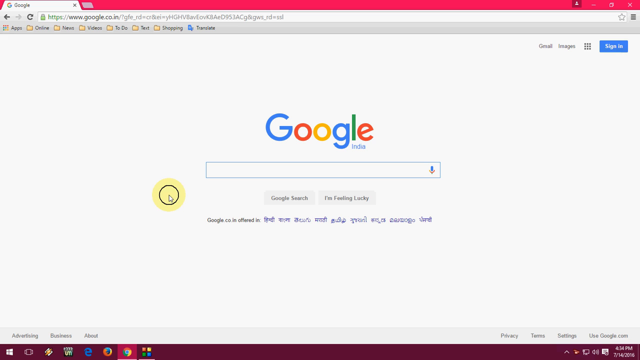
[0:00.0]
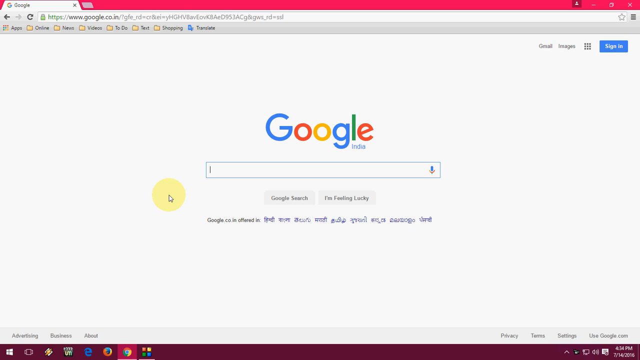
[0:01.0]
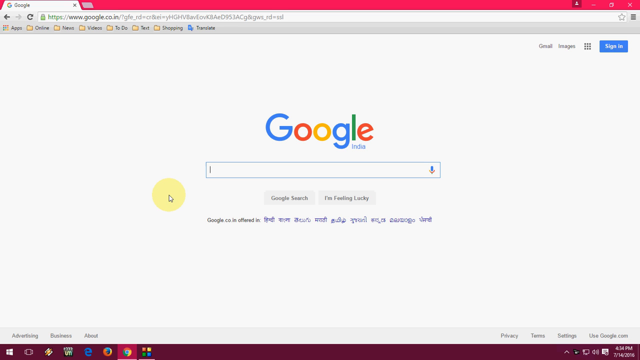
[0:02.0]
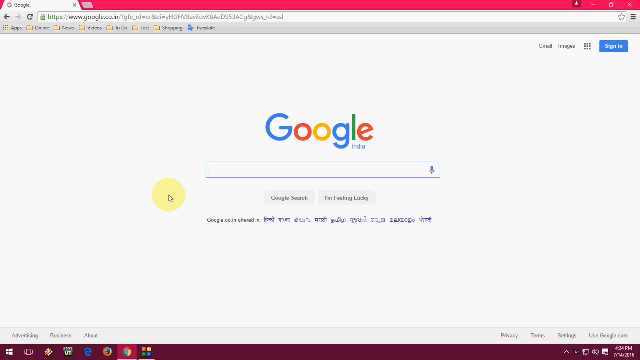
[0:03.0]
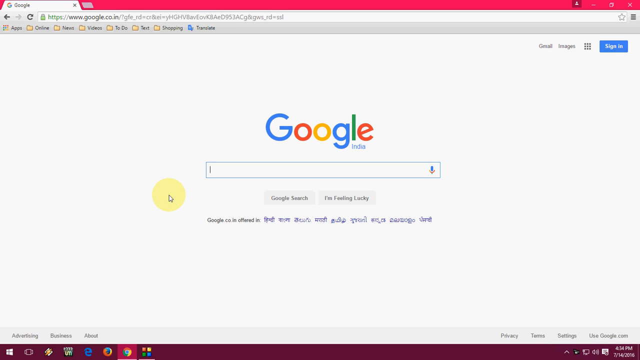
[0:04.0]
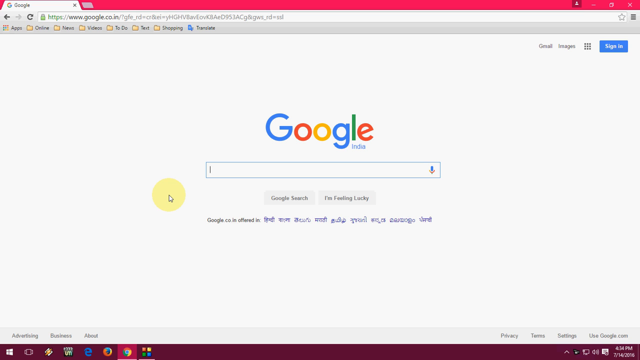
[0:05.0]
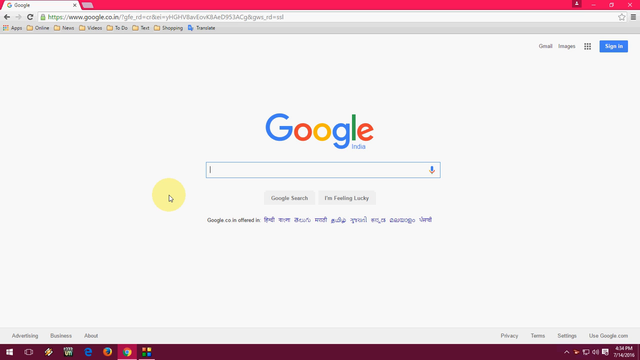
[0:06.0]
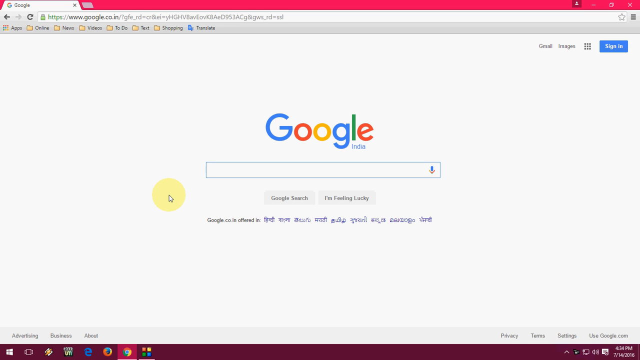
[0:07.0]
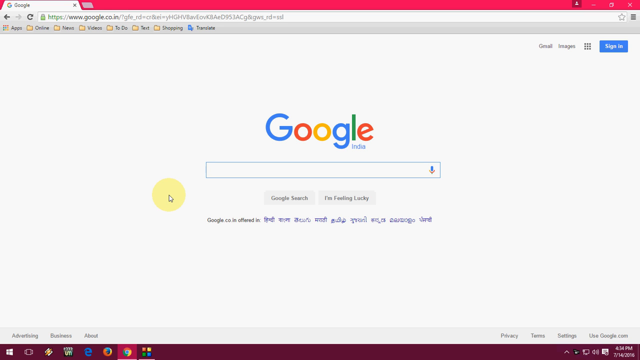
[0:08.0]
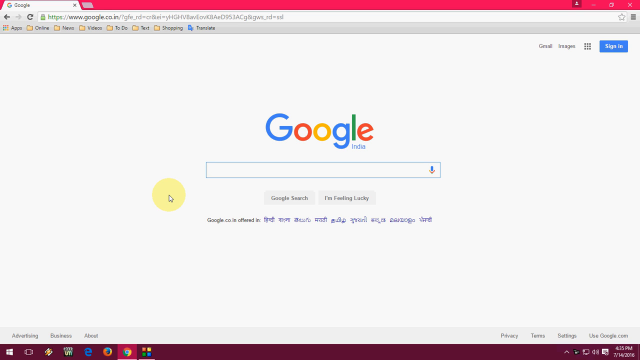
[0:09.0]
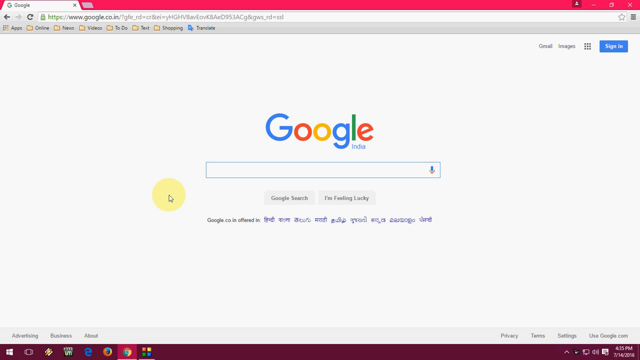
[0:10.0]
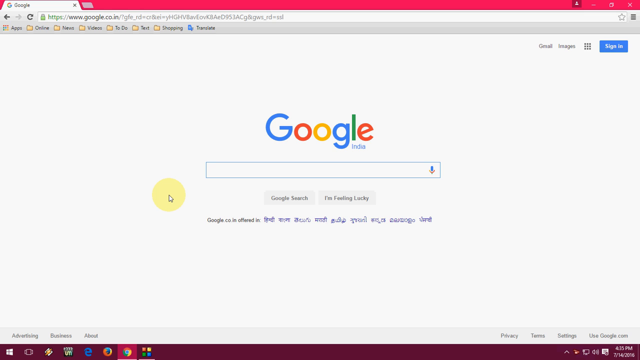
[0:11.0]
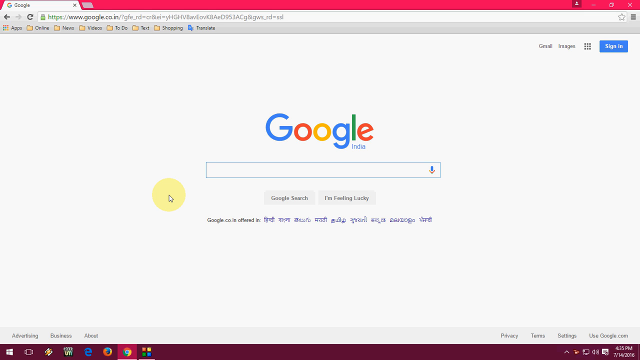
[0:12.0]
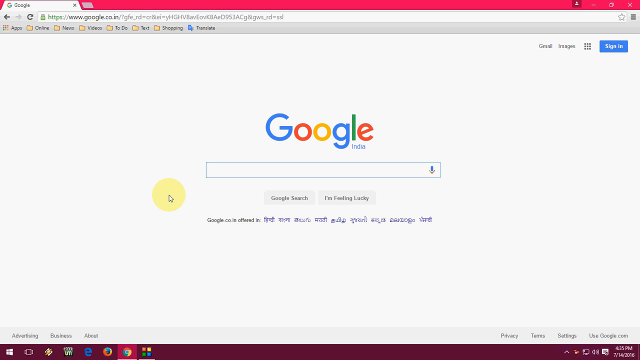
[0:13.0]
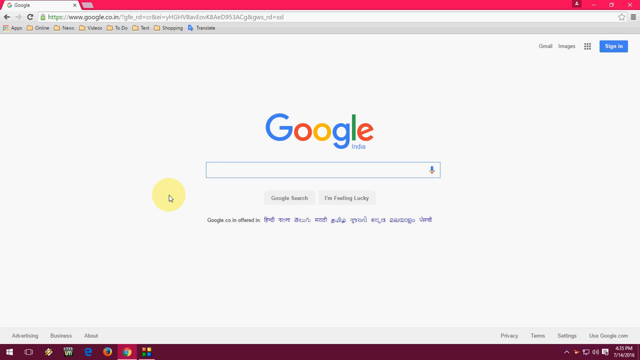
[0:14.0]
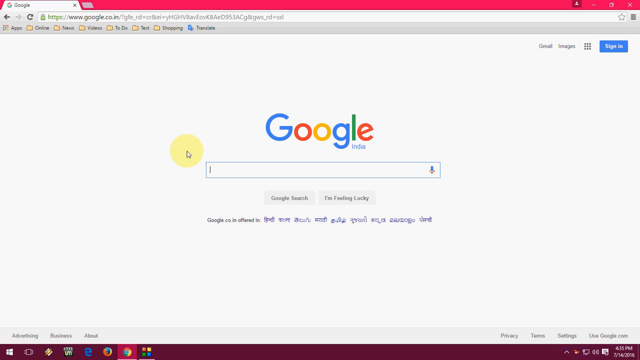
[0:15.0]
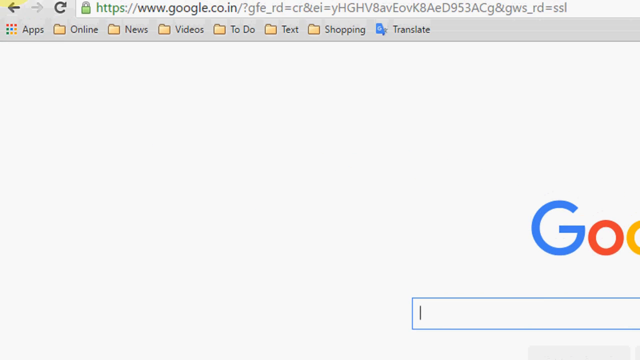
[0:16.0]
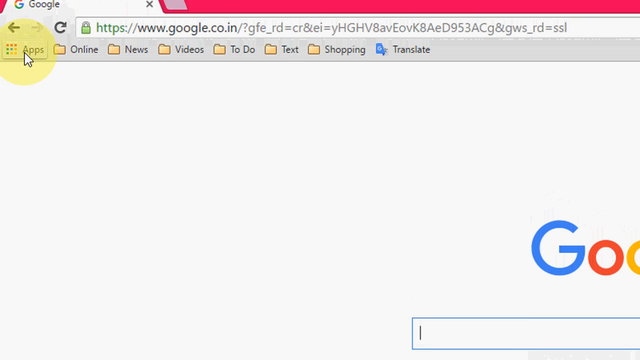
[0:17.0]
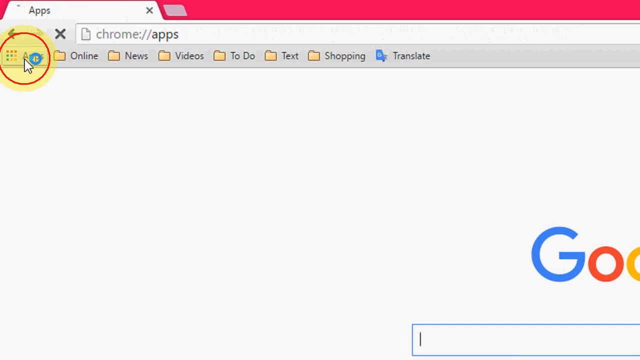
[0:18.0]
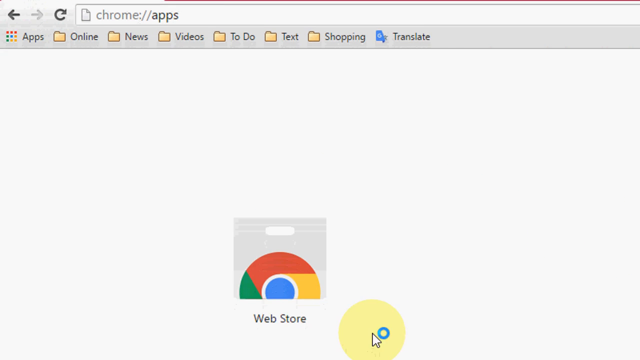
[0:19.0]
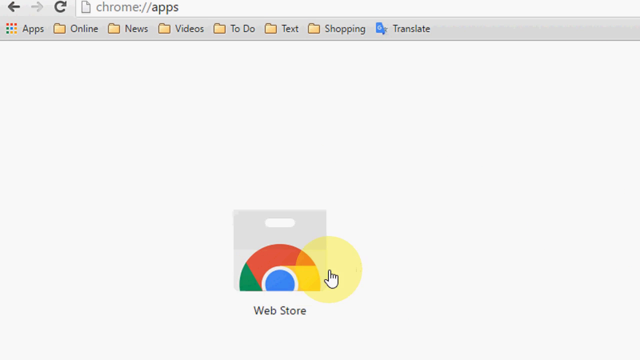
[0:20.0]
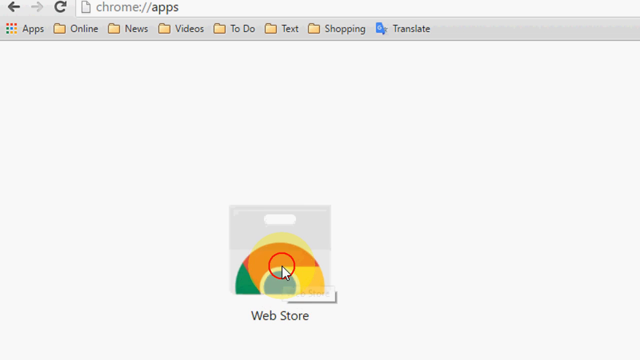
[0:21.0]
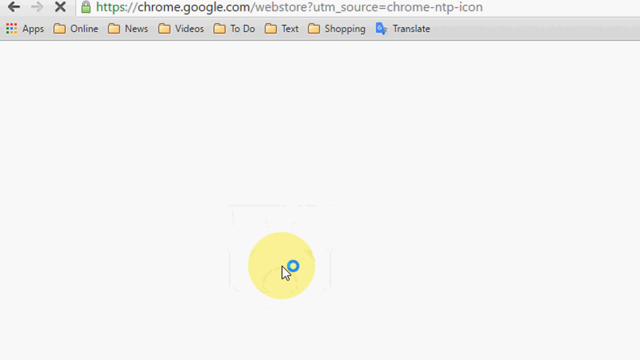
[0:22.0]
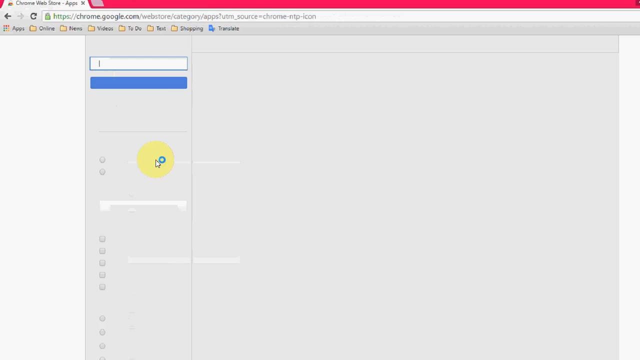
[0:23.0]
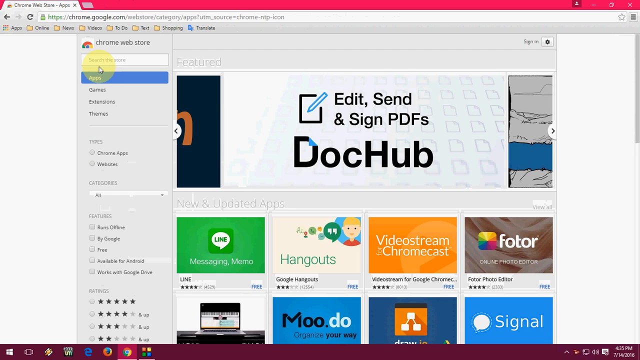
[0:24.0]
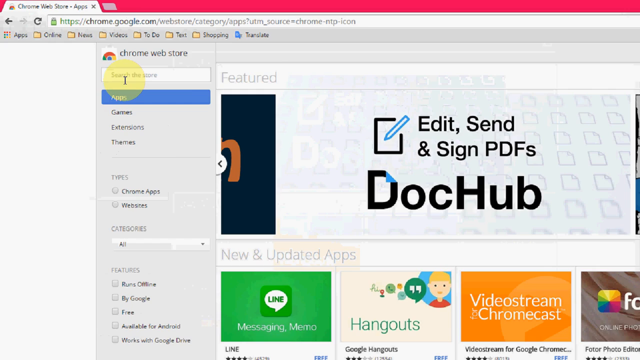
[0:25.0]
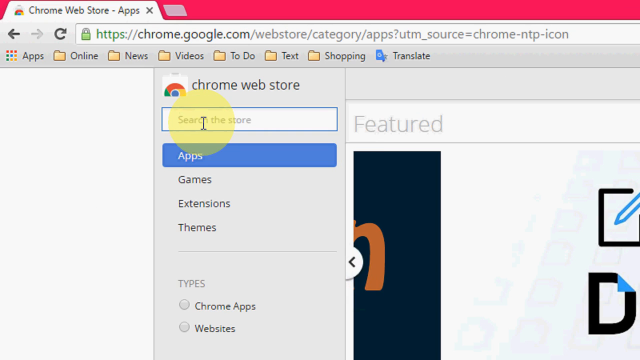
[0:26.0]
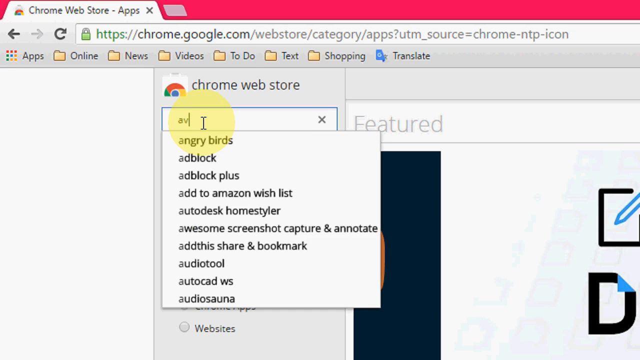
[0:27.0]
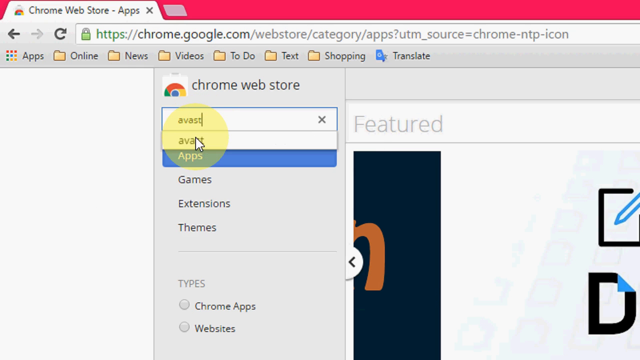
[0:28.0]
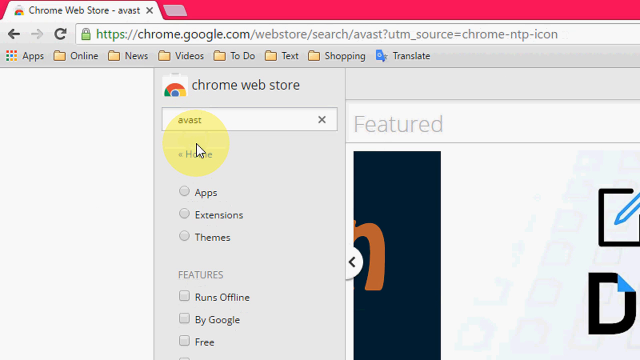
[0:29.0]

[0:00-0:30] A Google page located in India is on screen, at first just a blank page with a search bar and no query typed in. The user's mouse cursor is highlighted in yellow, a yellow circle with a black ring inside it. The cursor hovers over the page for a bit without moving. The view then zooms in toward the upper left corner and the user clicks, then clicks Web Store, zooms into a search bar, types in Avast, and clicks on Extensions; they are looking for something in particular, though what exactly is not shown. The page is a typical Google web page with a search bar and different languages listed at the bottom showing what it is offered in. A pink bar runs across the top of the screen, and the Google tab is the only one open.